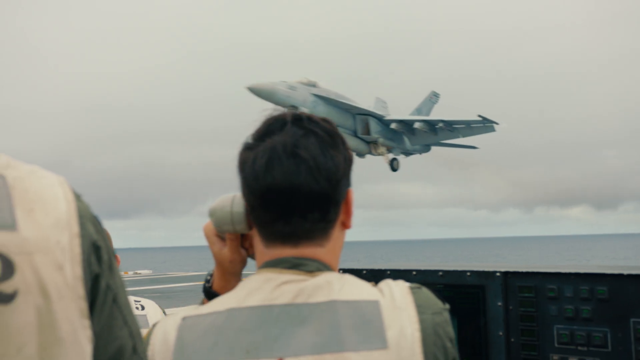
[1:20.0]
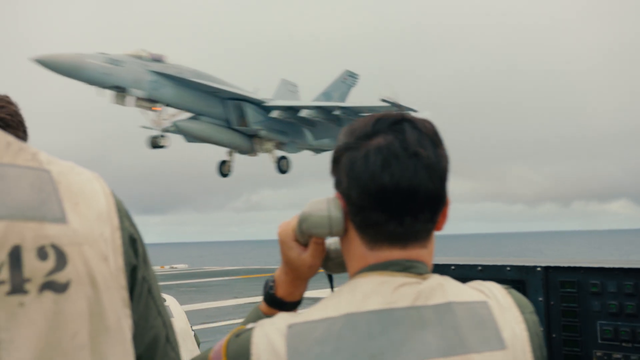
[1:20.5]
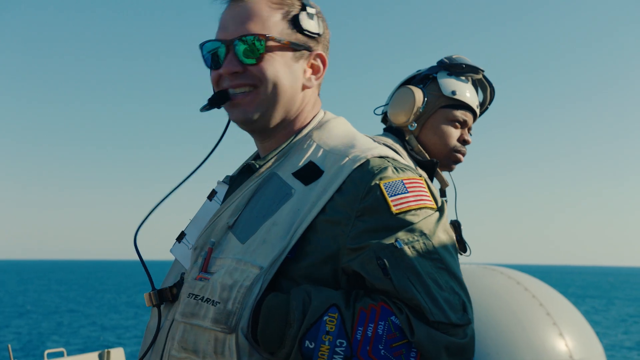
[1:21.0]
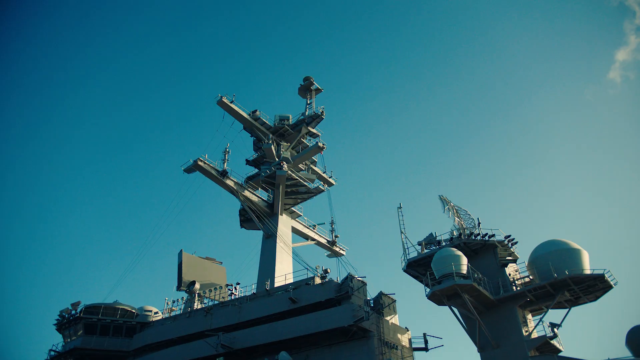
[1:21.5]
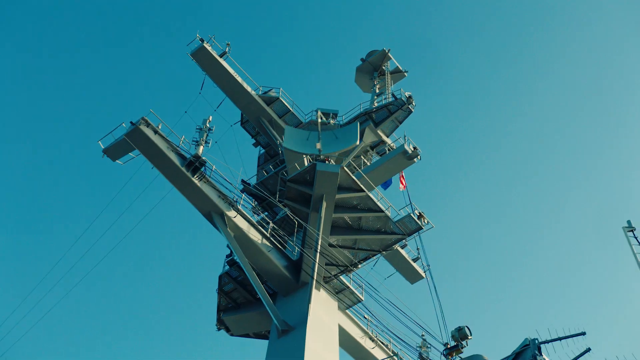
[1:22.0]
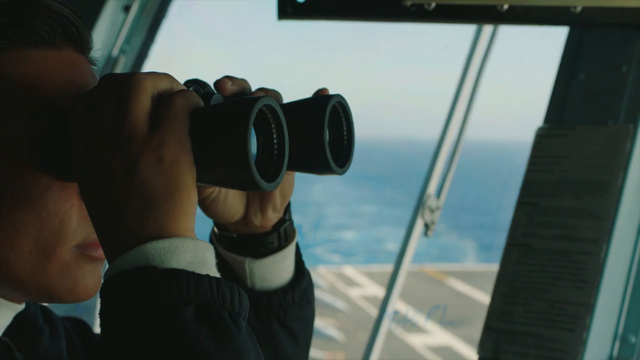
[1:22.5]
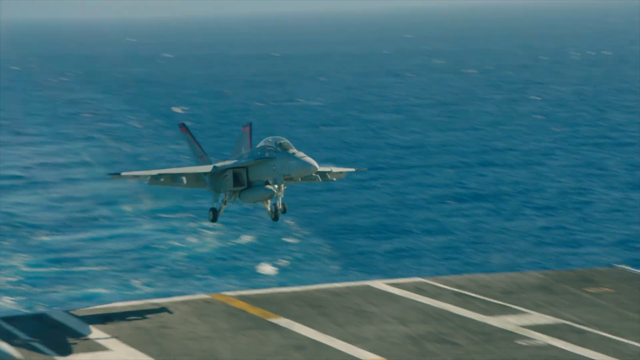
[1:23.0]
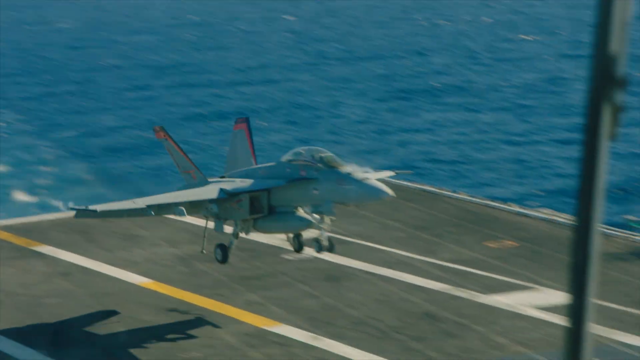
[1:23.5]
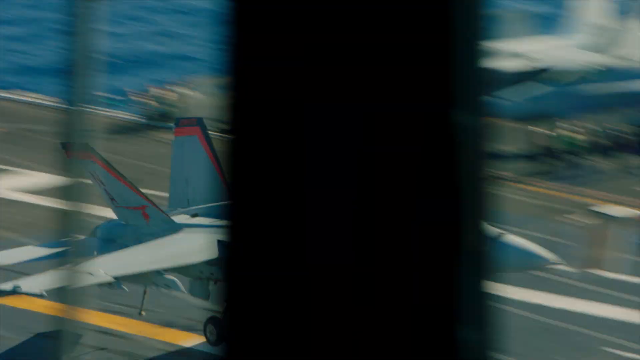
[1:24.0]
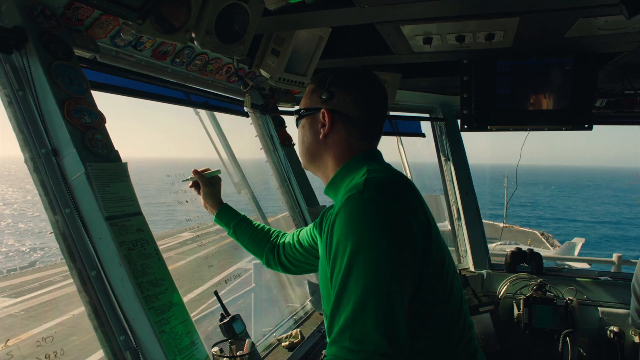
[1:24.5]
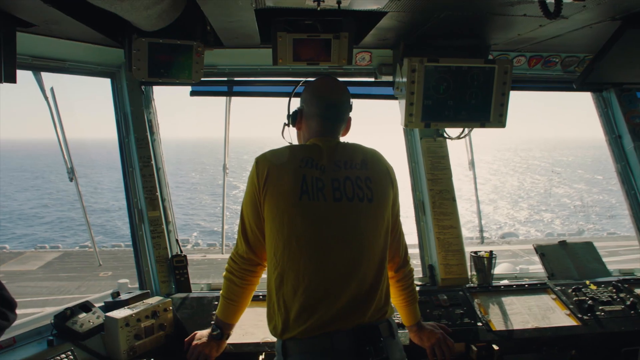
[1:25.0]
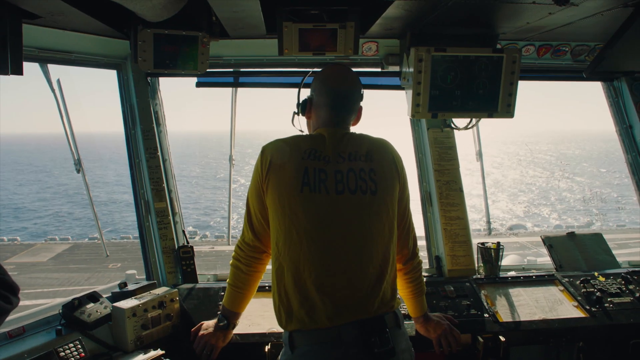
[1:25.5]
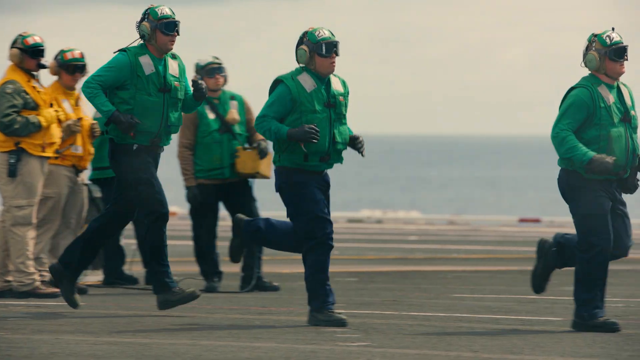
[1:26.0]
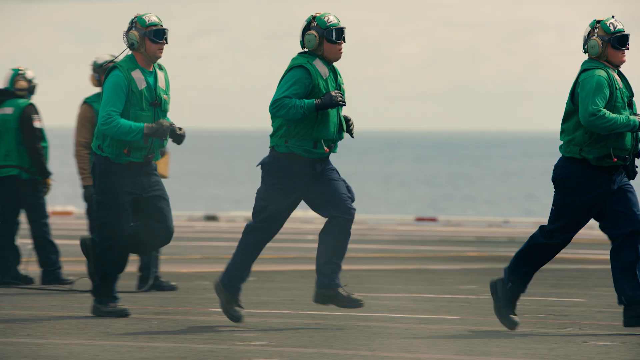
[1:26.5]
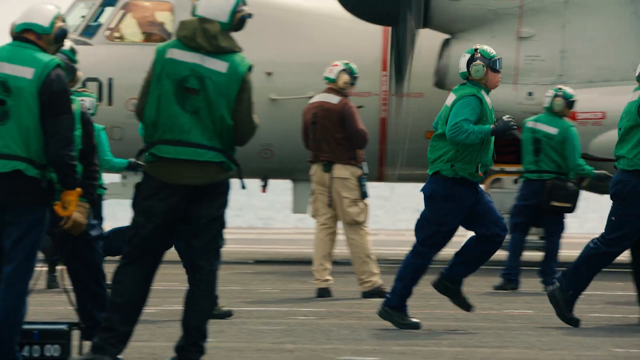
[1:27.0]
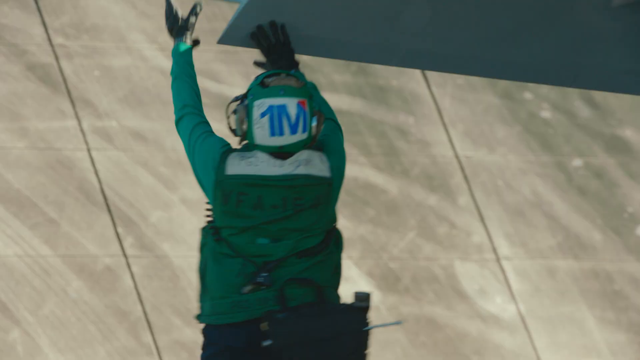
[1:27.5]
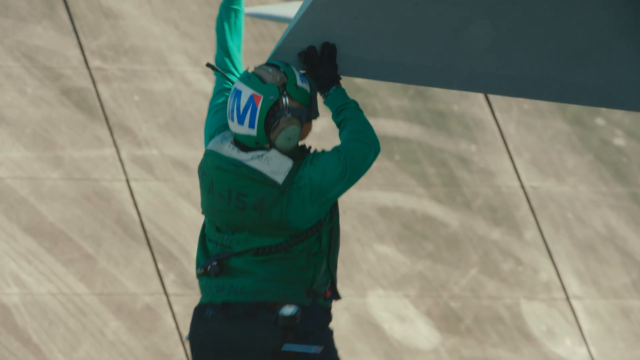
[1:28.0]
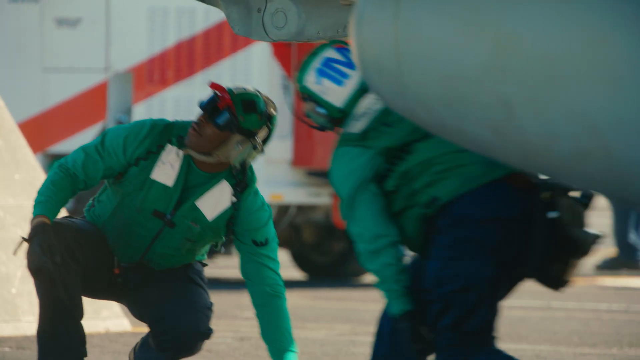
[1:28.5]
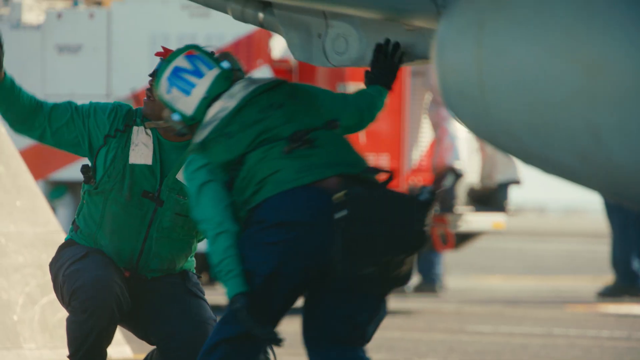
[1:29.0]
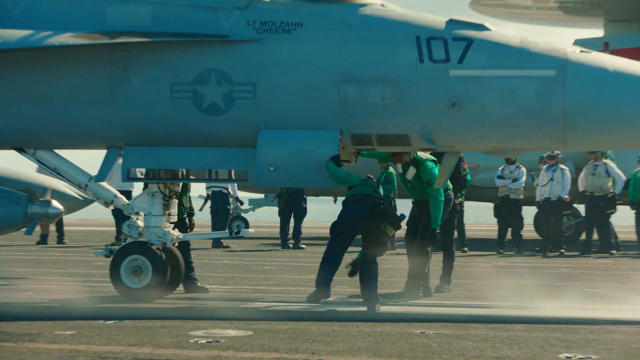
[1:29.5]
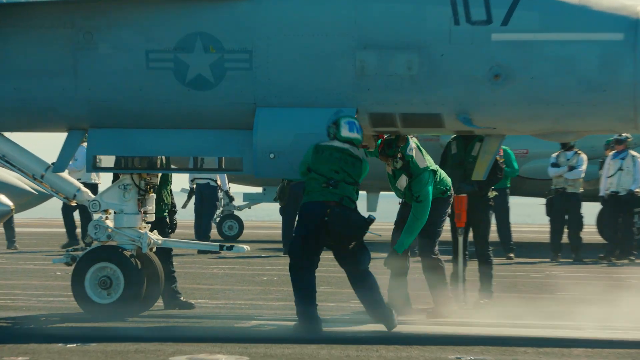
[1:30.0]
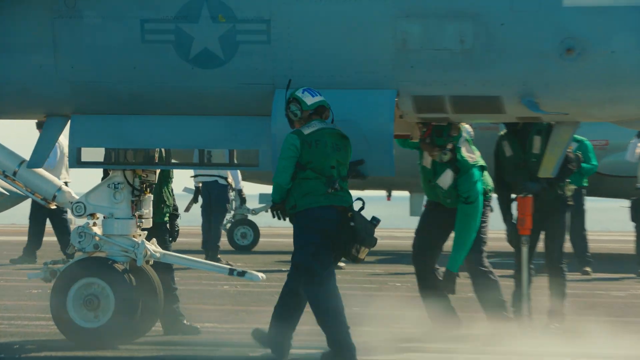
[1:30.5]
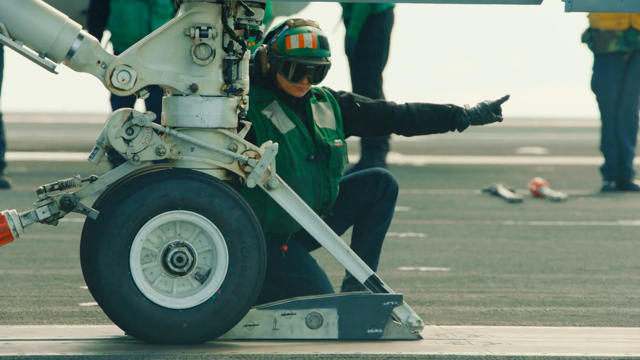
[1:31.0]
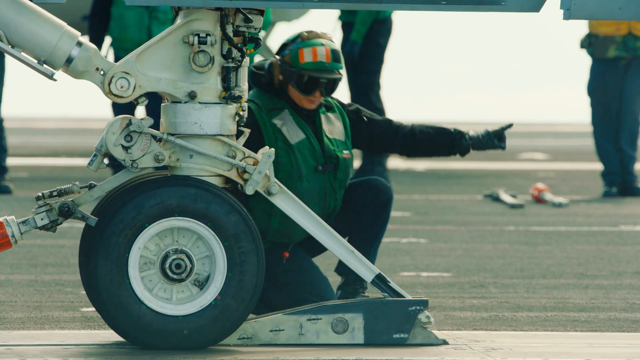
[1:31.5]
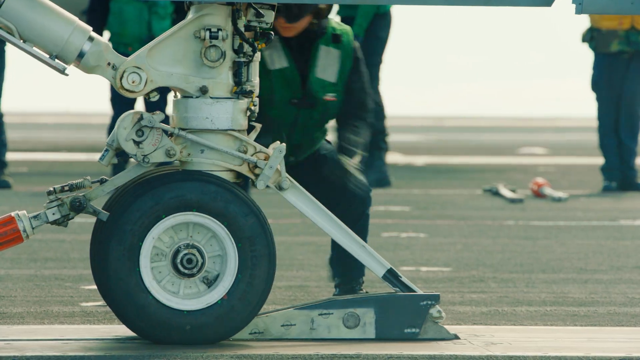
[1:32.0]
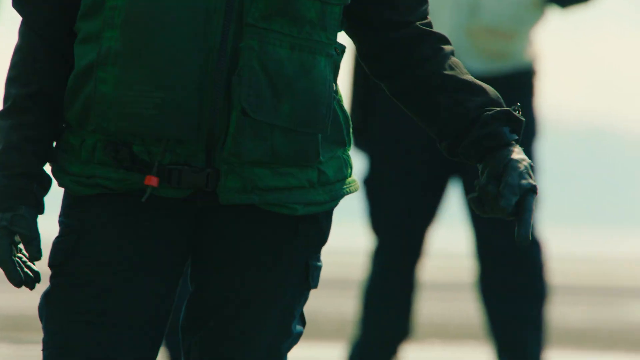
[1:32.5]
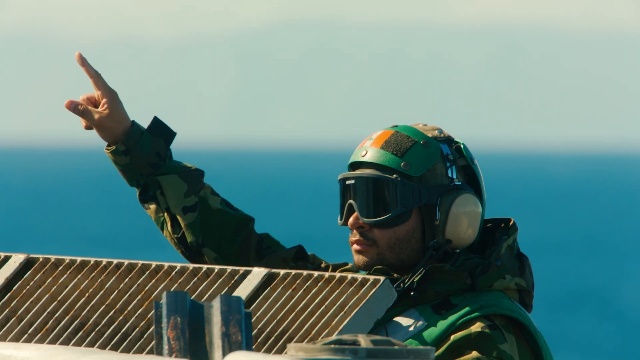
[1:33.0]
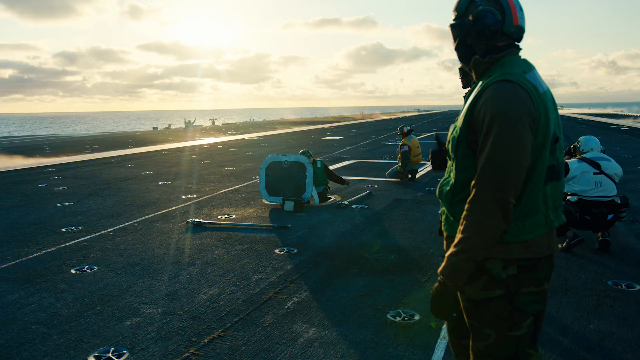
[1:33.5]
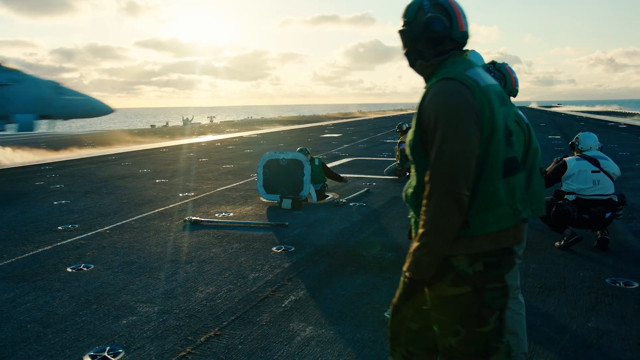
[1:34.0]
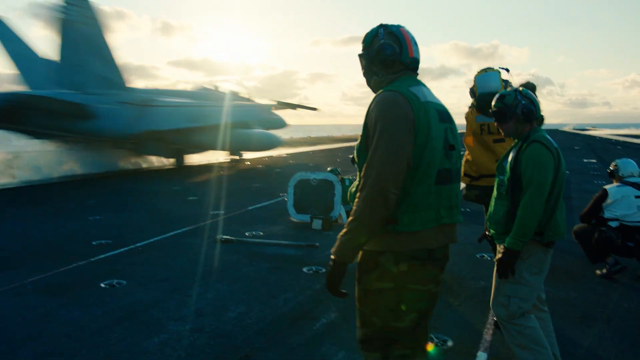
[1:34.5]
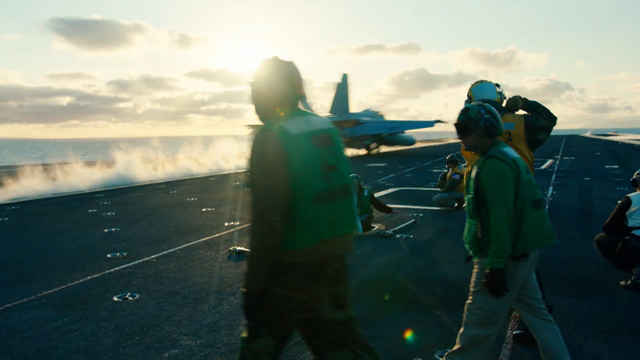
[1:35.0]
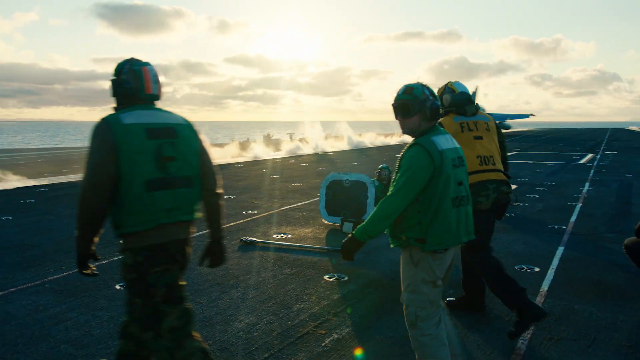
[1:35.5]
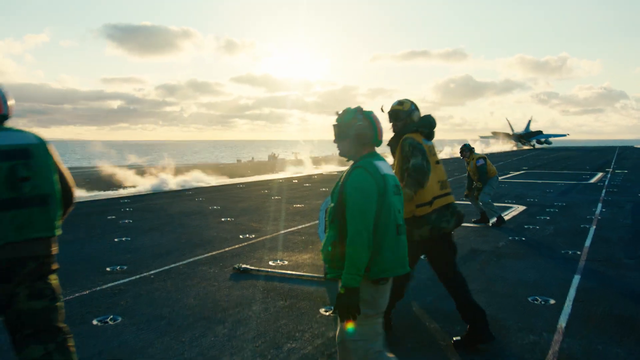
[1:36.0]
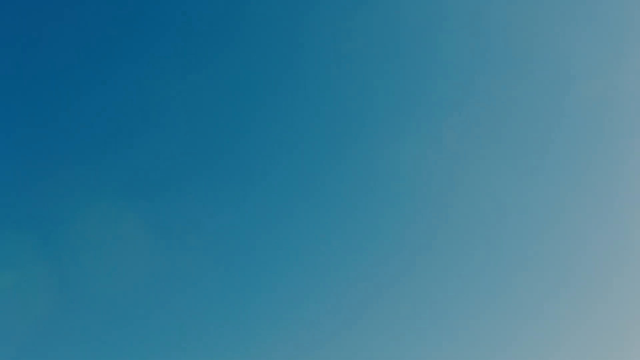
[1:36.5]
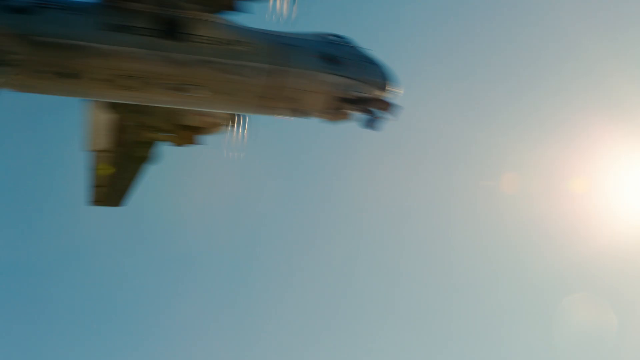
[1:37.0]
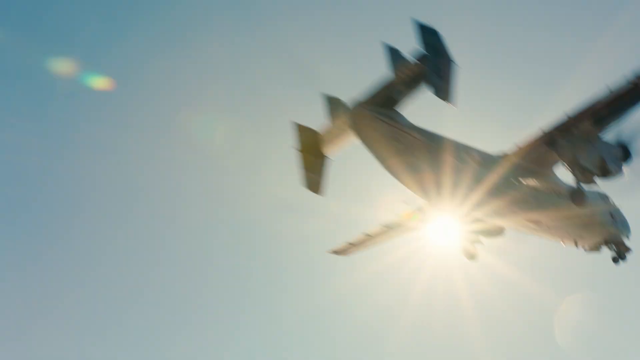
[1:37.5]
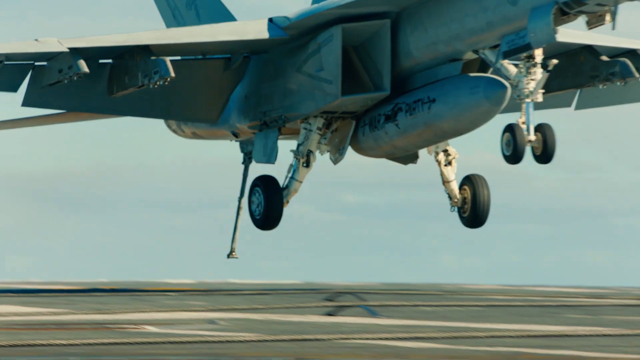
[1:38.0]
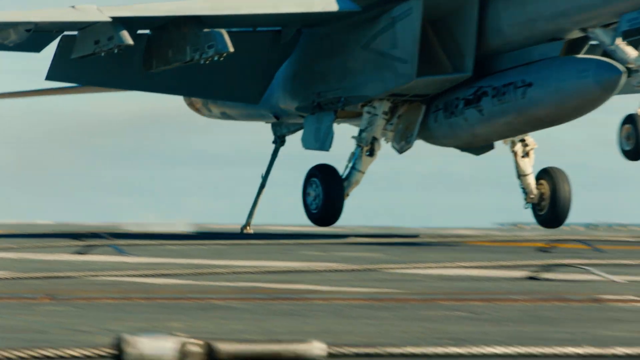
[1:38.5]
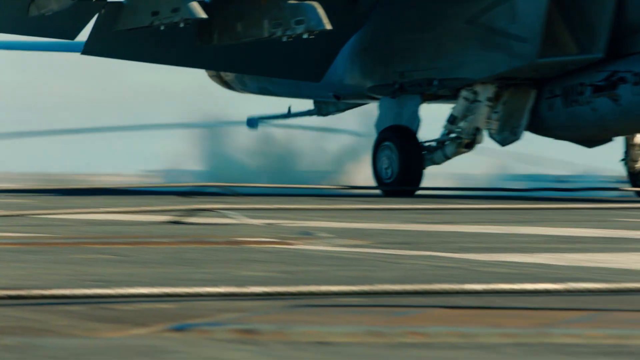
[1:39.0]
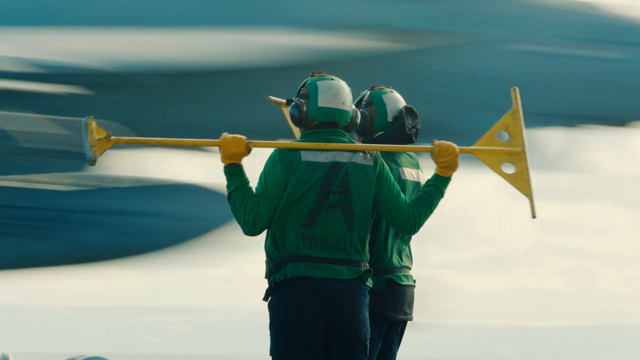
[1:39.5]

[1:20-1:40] A plane lands, followed by a close-up of a couple of aircraft controllers, a quick view of some kind of tower, and another plane landing. The view apparently shifts inside the tower: there are windows all around, people standing inside with headsets on, and various screens attached throughout the room, and in front of them is a view down onto the tarmac on the ship's deck. Outside on the tarmac, several people in green uniforms run across, moving underneath the wings and bodies of the plane. Once again the front wheel of the plane is shown, and one of the green-uniformed crew holds out a hand, pointing toward the right. Close-ups of people's various hand gestures follow, then a group in yellow uniforms on the right watches as a plane lands on the left side of the frame. A plane flies overhead, another is shown landing in close-up, and two aircraft controllers in green are briefly seen from behind.